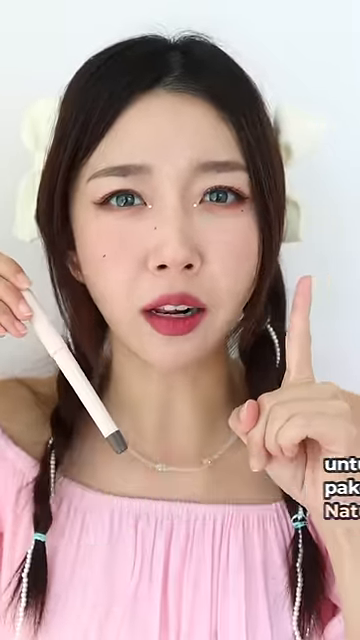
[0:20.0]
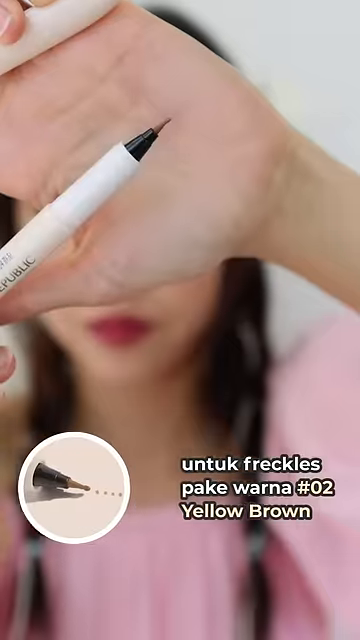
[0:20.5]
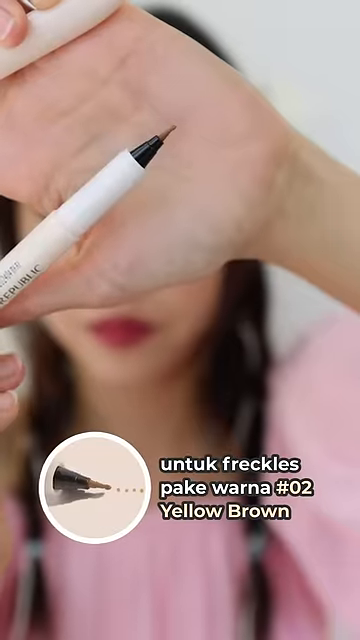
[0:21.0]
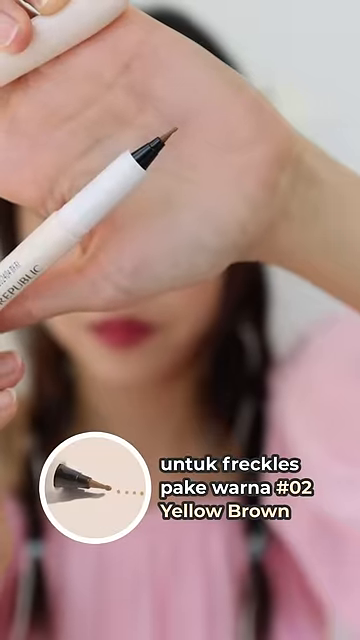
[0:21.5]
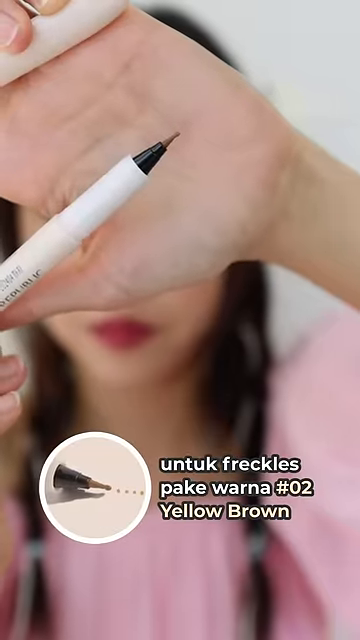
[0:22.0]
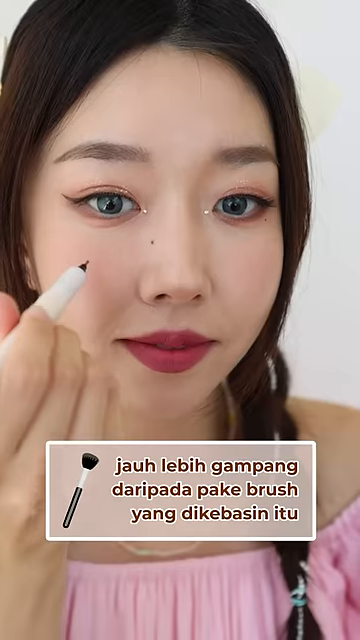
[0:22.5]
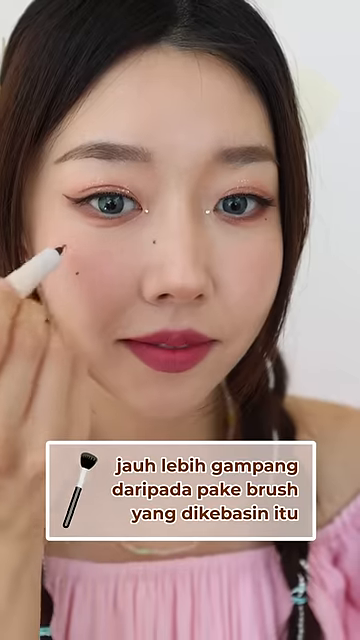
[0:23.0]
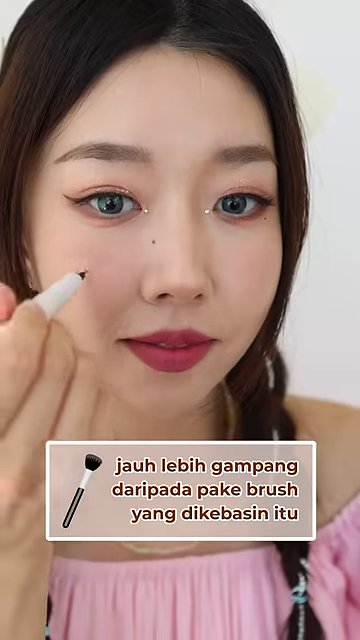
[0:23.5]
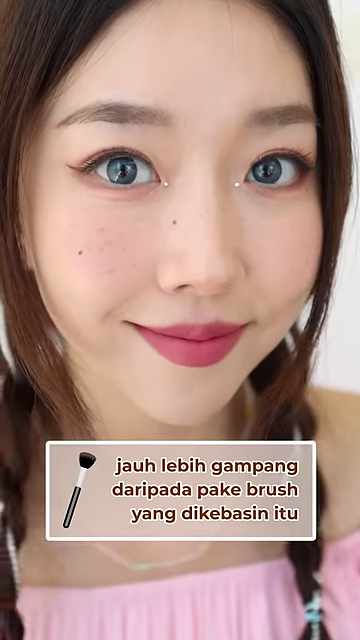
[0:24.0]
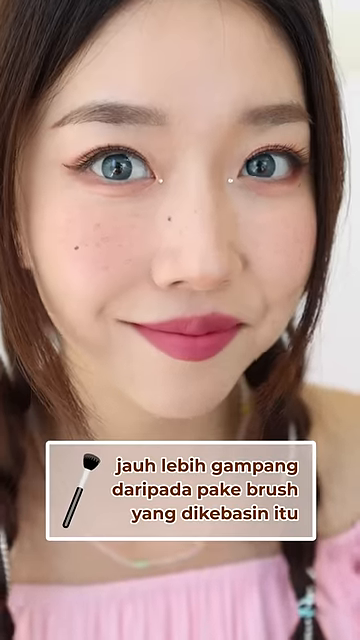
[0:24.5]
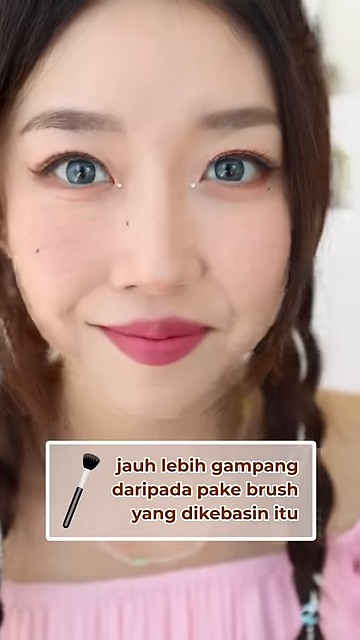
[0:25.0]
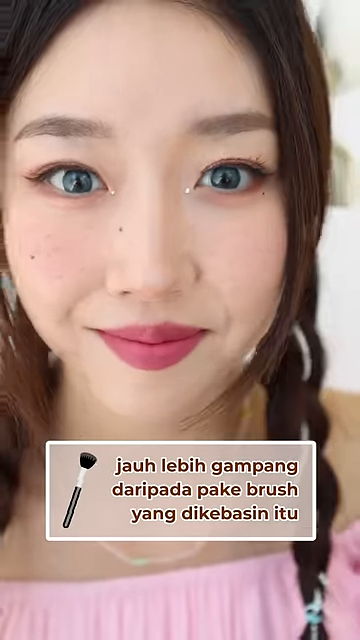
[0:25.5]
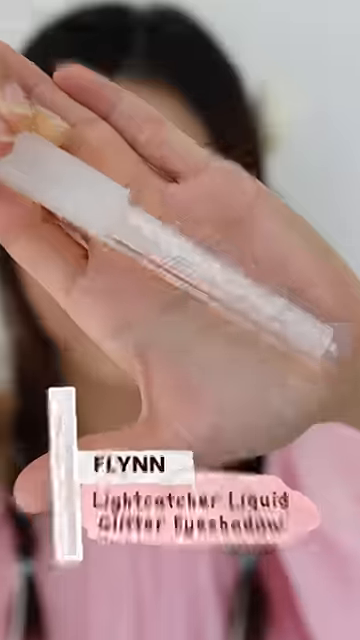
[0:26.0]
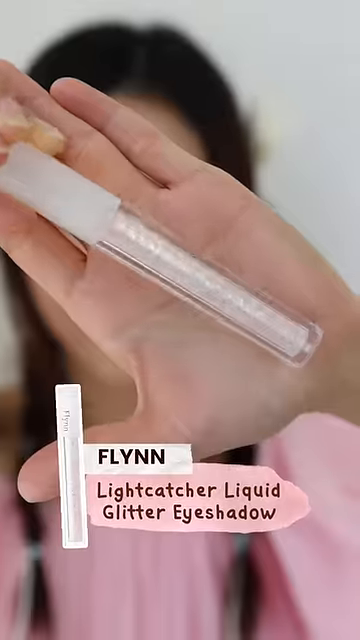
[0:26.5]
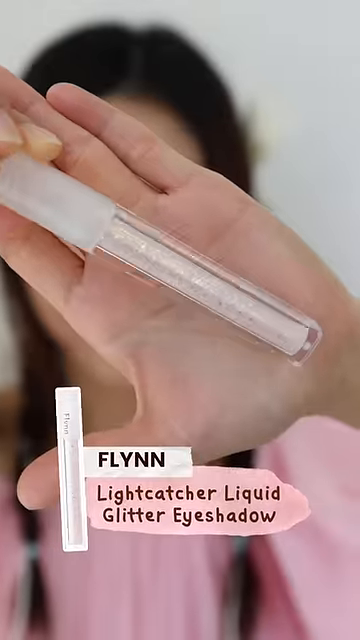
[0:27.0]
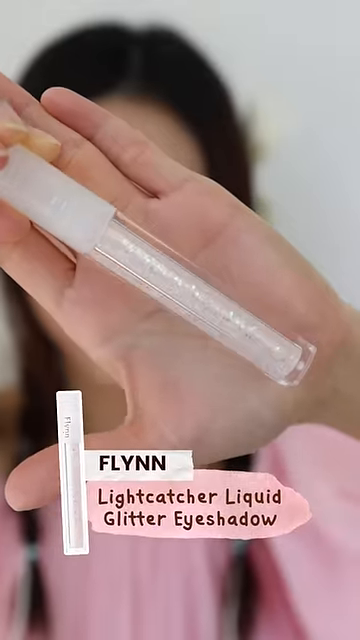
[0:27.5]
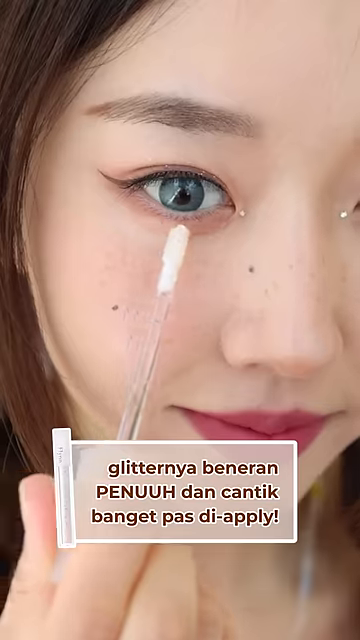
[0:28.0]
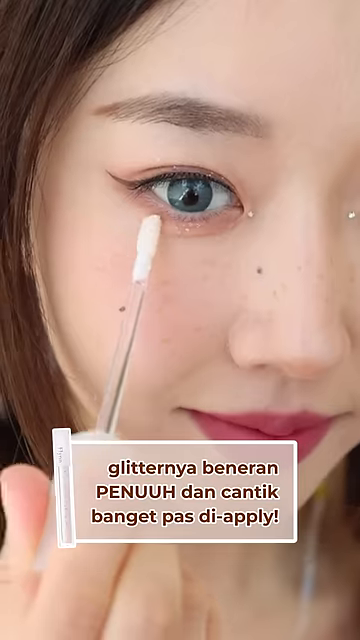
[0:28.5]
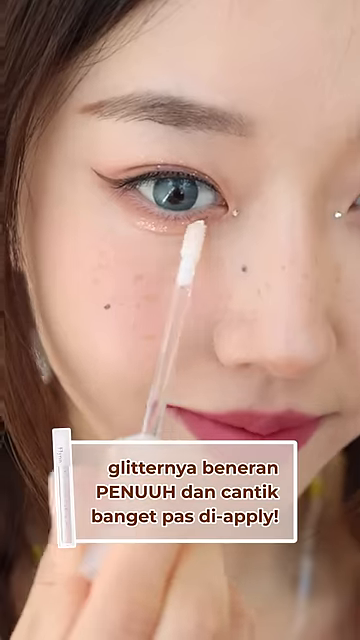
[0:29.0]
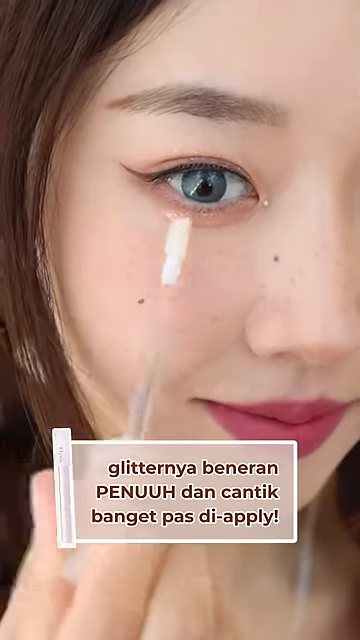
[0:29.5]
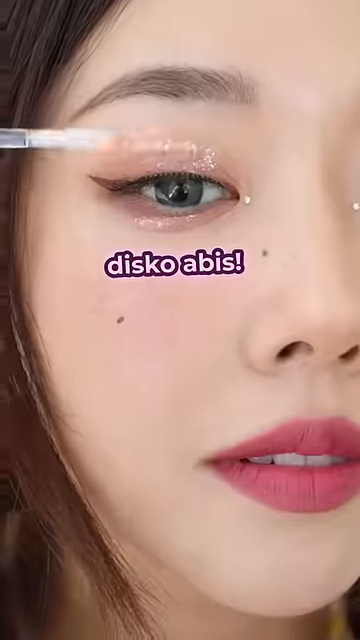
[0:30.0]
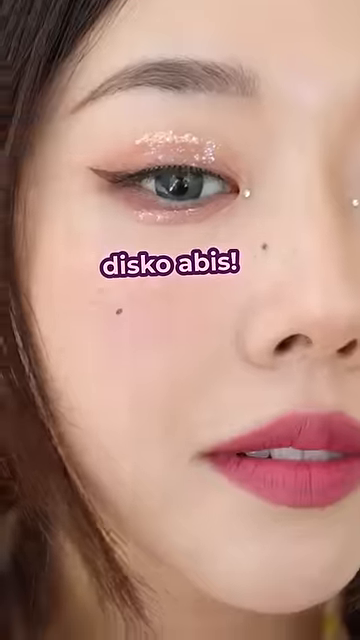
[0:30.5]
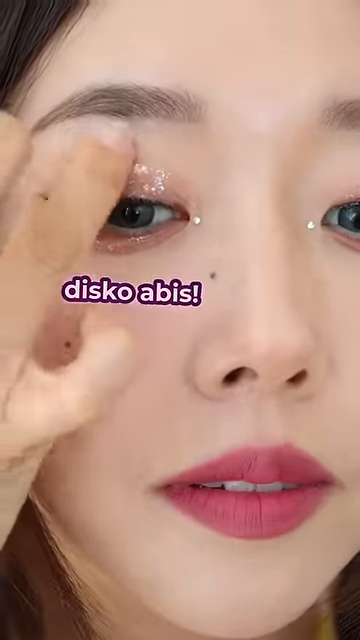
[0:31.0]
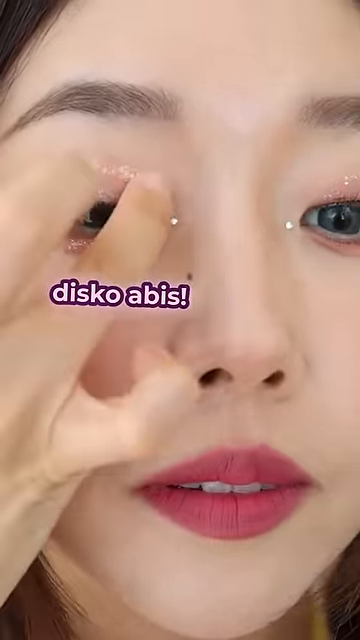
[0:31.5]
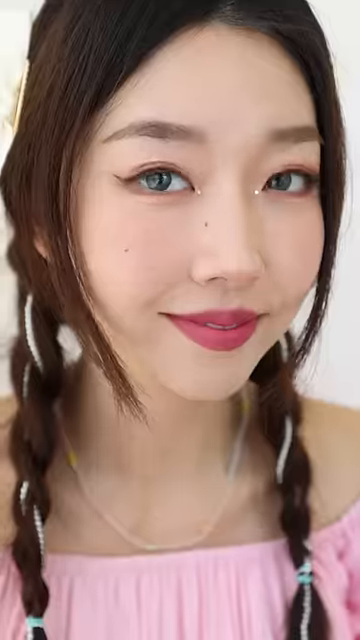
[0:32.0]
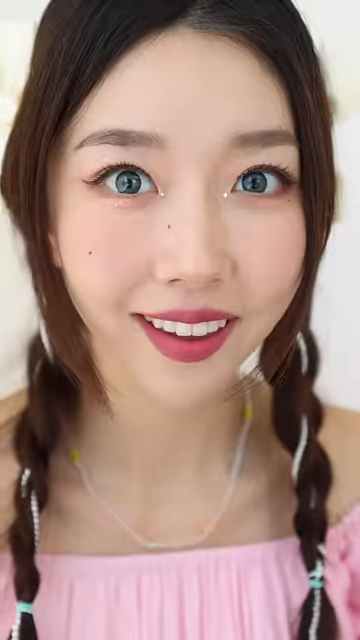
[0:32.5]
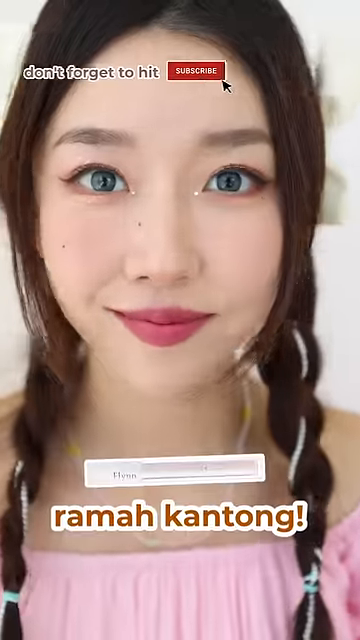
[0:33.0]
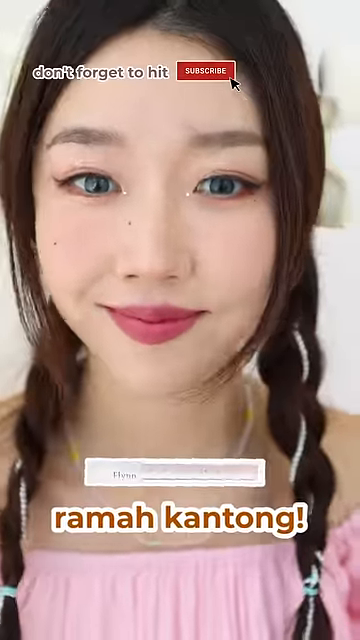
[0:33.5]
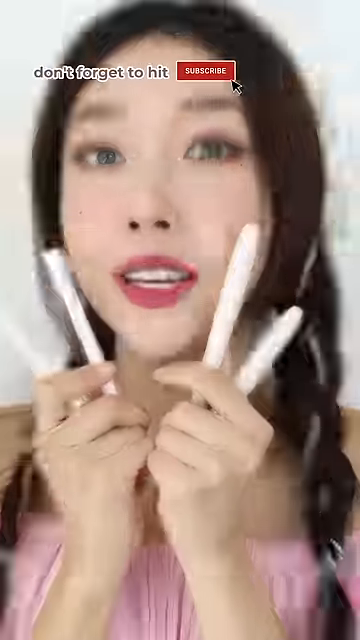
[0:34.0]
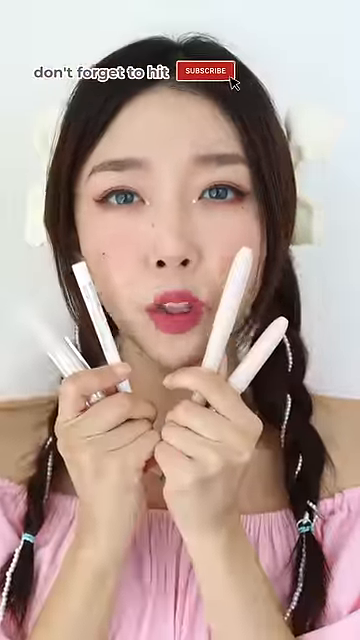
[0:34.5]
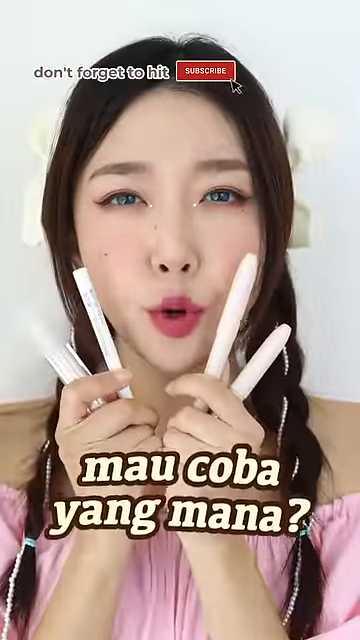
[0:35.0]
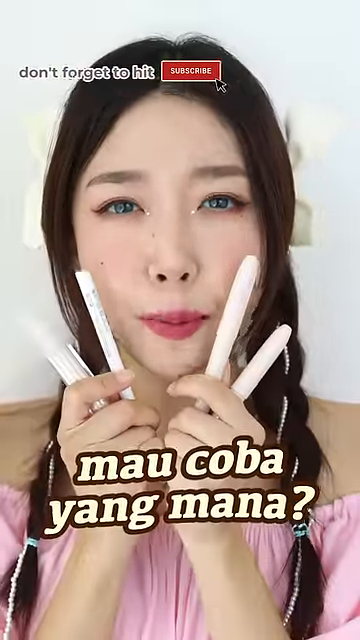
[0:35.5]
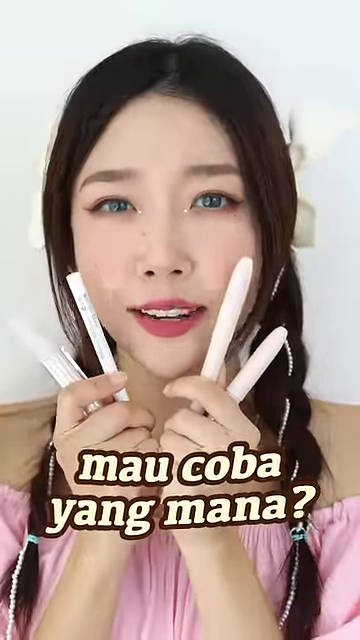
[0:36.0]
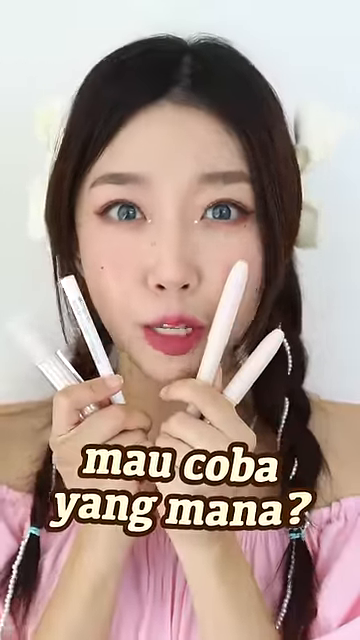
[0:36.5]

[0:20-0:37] The girl holds up another pen-like beauty product, this time with the cap off, in front of her palm. A closer shot of her face shows her gently tapping the pen on her upper cheeks to create a freckle-like effect. She then holds up another product, a Flynn Lightcatcher Liquid Glitter Eyeshadow, and demonstrates how to put it on, applying a generous amount under her eye and on her top lid. She blends the glitter out with her finger, giving her top and lower lids a very shimmery, glittery effect. Finally she holds up all of the makeup products she used, kind of just holding them up to her face as she gives the outro, speaking very enthusiastically to the camera and making very exaggerated expressions.